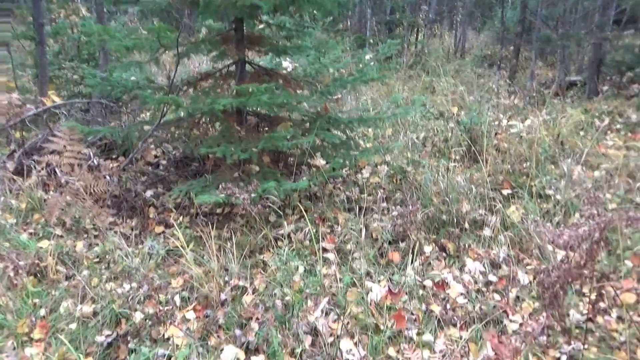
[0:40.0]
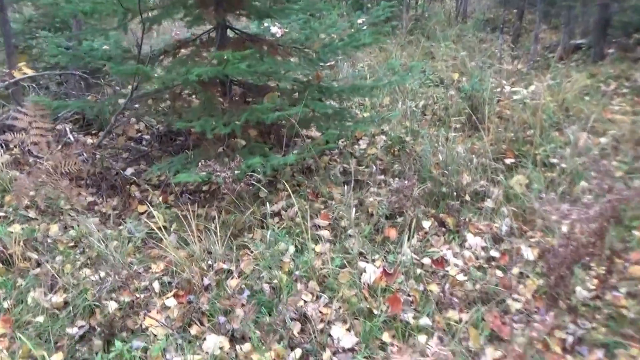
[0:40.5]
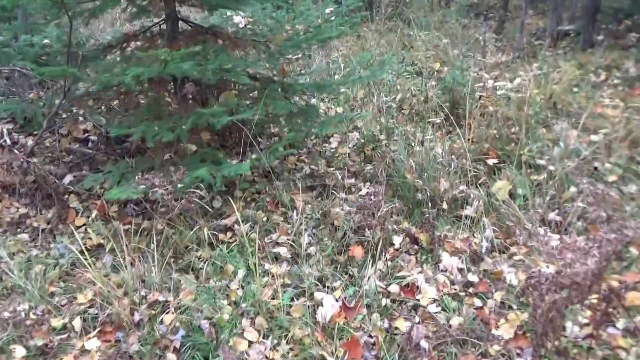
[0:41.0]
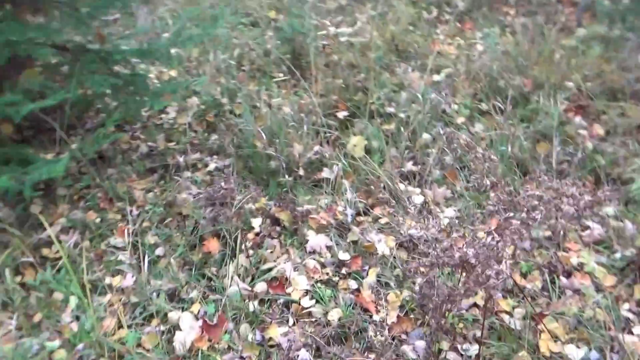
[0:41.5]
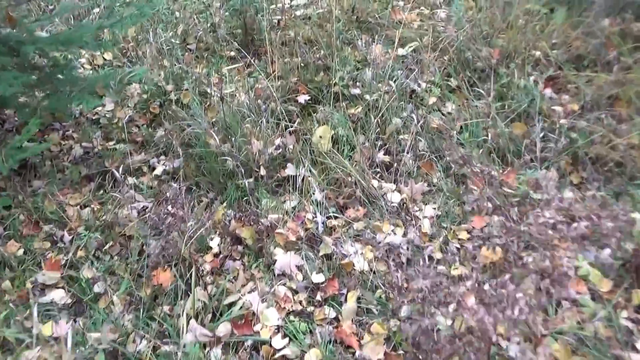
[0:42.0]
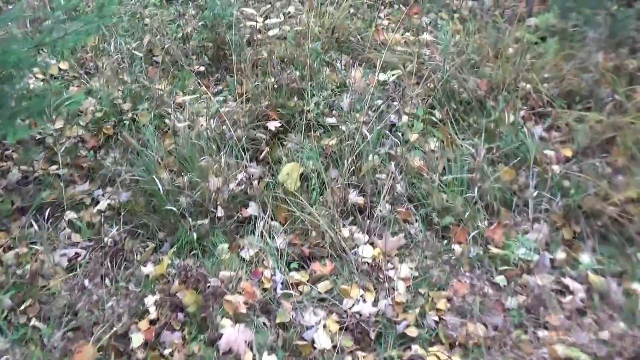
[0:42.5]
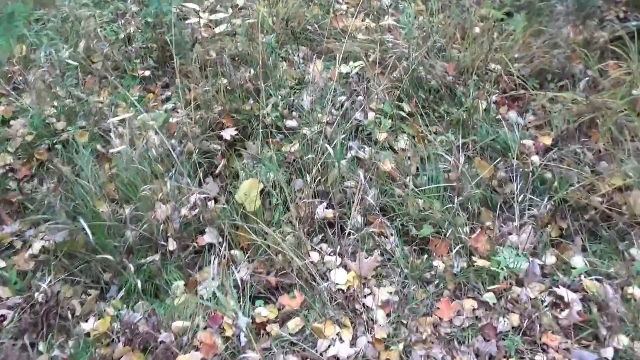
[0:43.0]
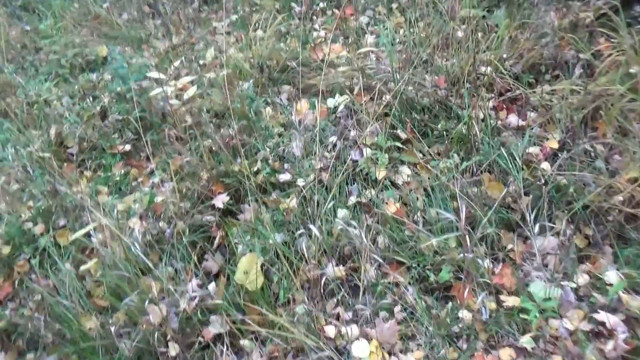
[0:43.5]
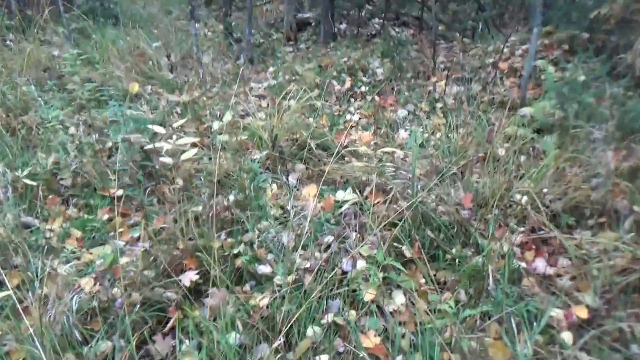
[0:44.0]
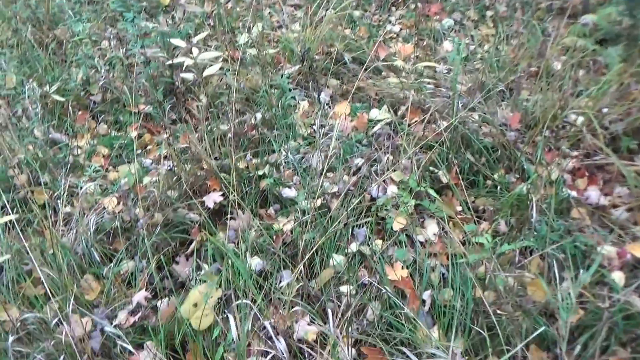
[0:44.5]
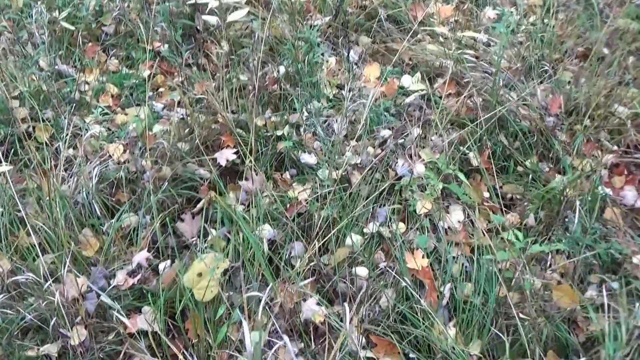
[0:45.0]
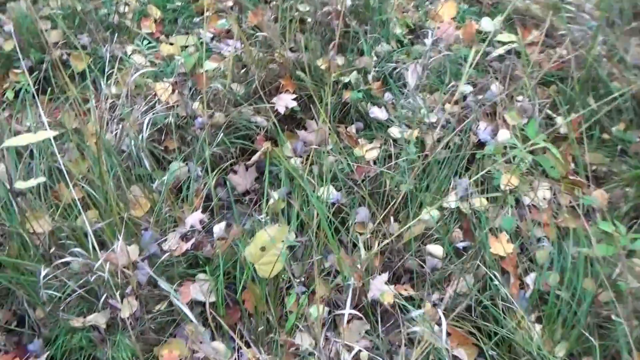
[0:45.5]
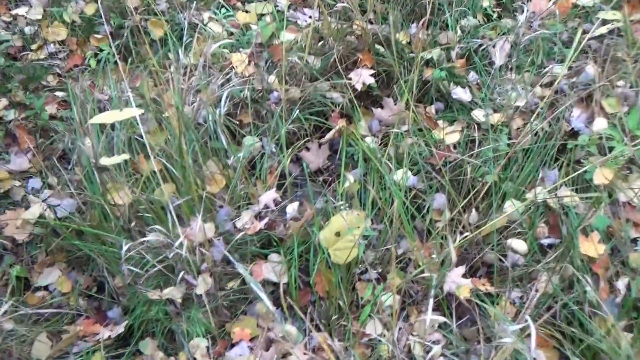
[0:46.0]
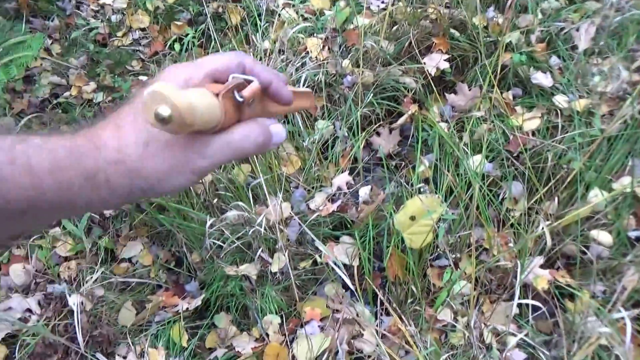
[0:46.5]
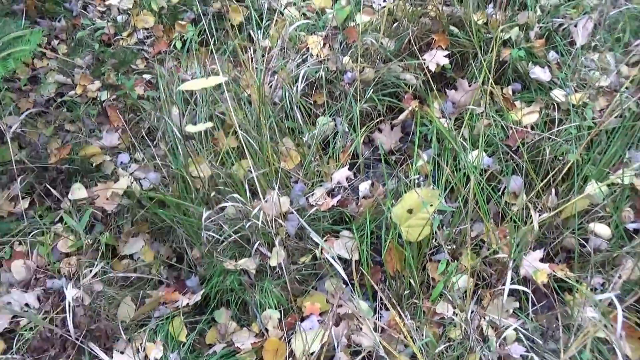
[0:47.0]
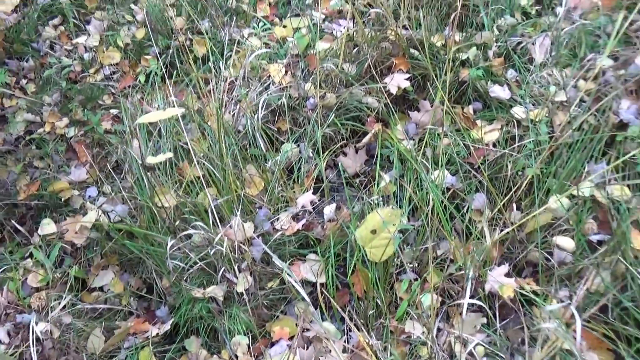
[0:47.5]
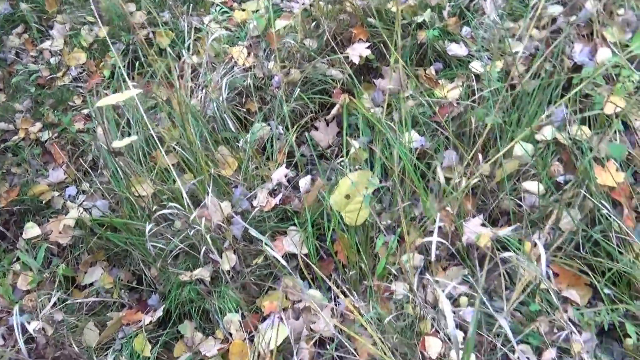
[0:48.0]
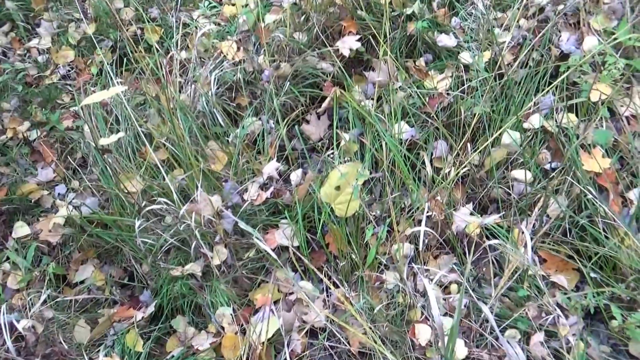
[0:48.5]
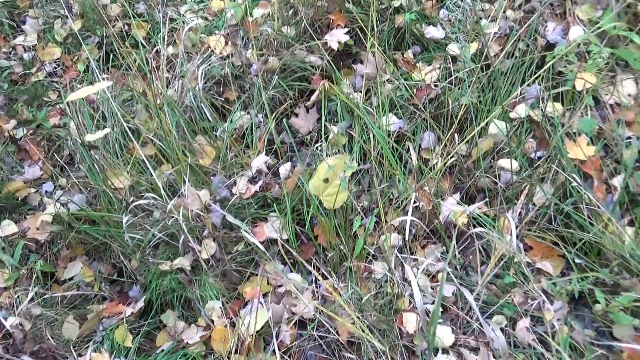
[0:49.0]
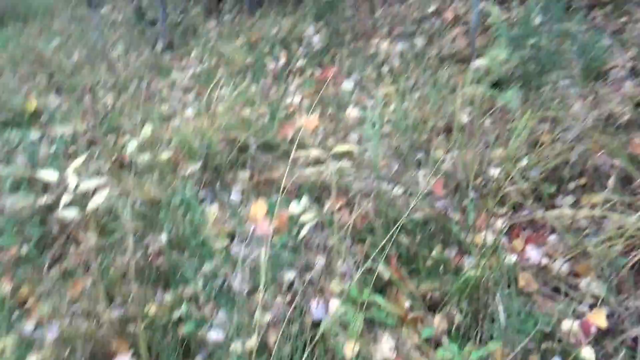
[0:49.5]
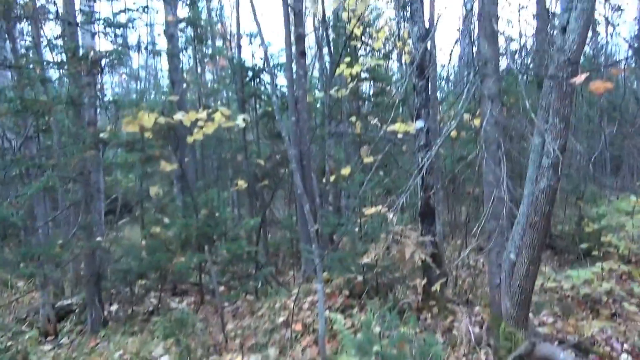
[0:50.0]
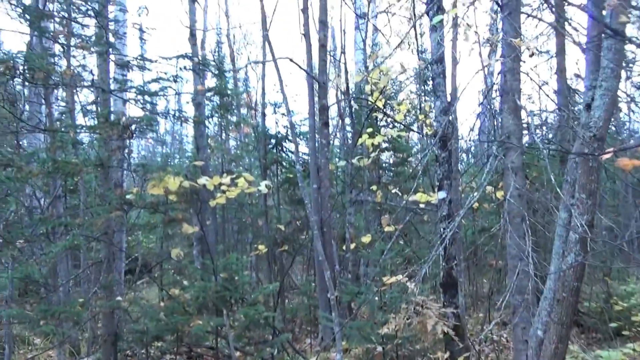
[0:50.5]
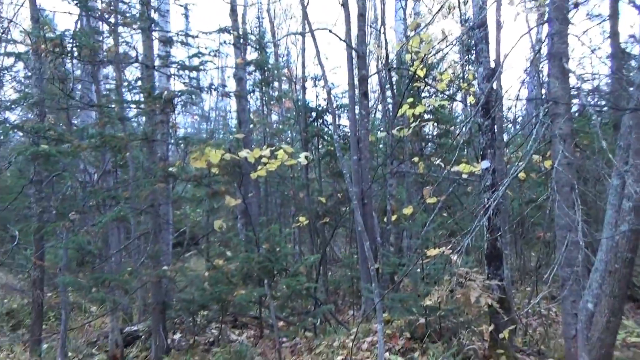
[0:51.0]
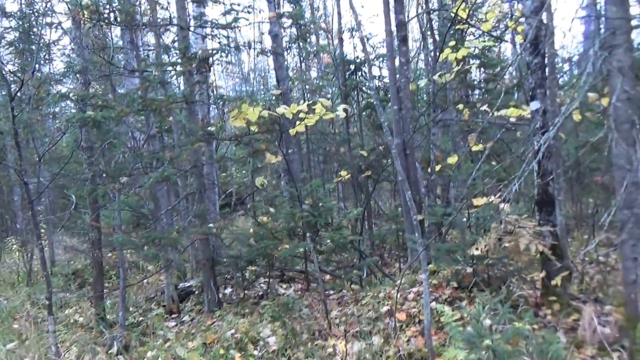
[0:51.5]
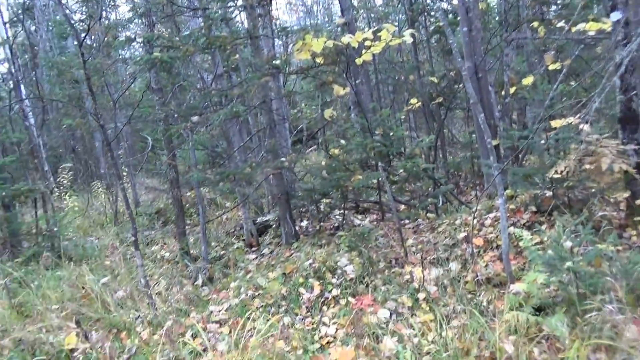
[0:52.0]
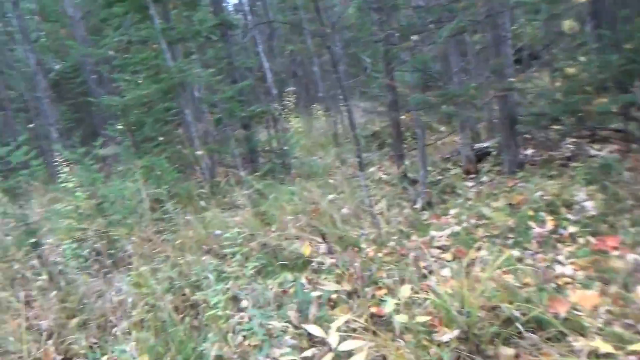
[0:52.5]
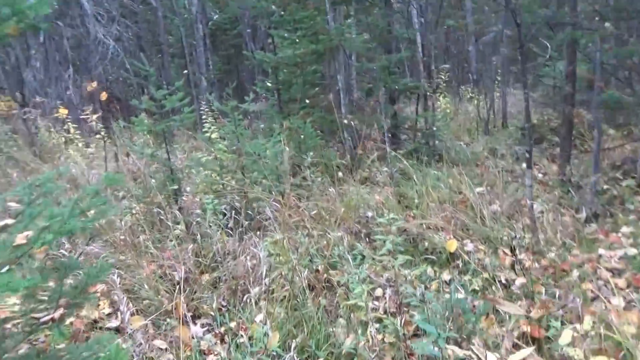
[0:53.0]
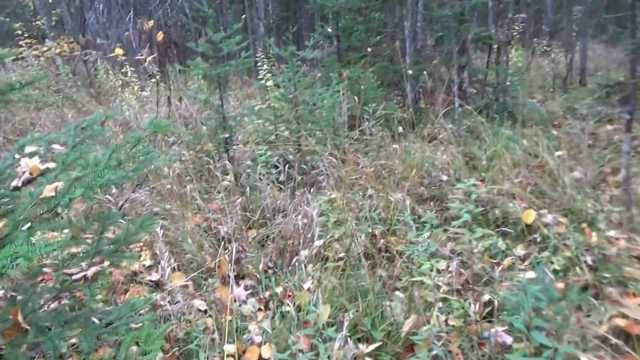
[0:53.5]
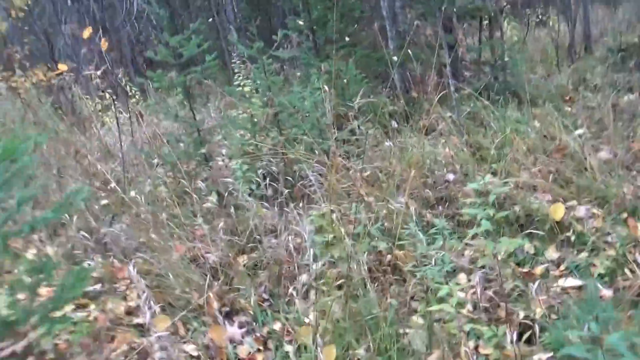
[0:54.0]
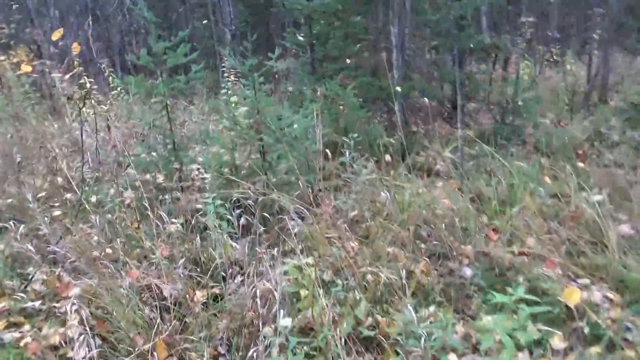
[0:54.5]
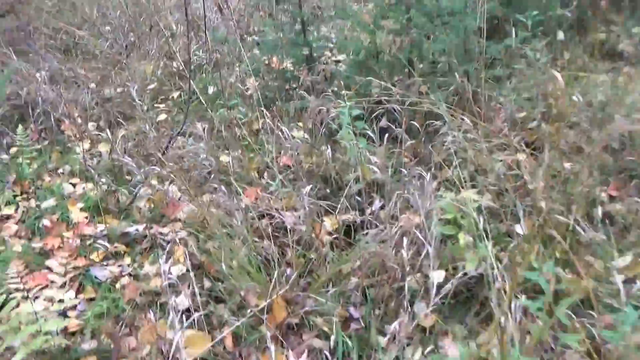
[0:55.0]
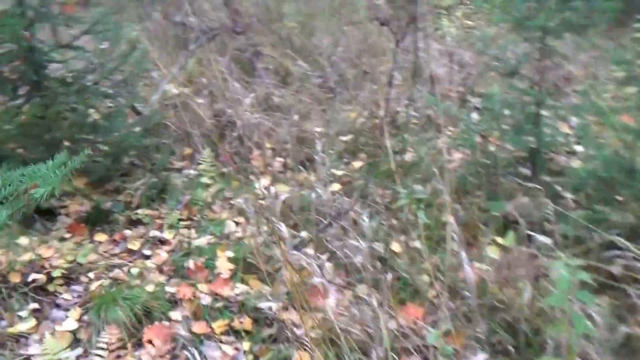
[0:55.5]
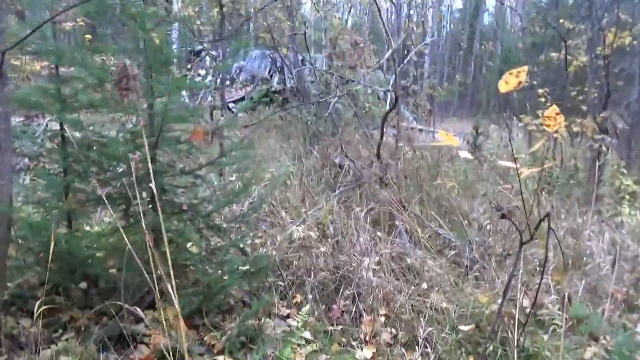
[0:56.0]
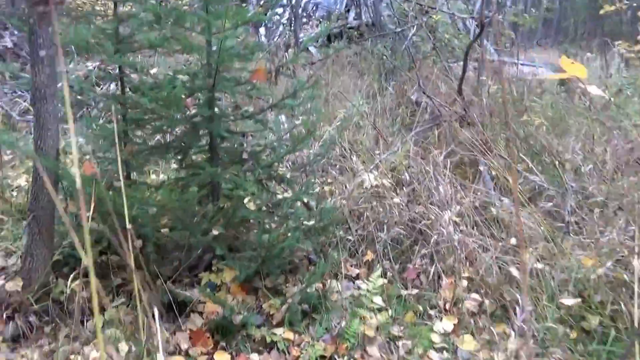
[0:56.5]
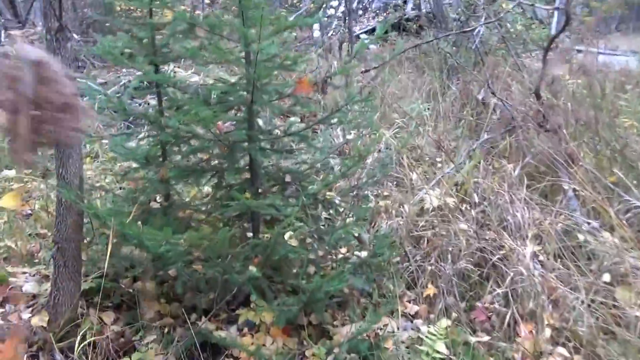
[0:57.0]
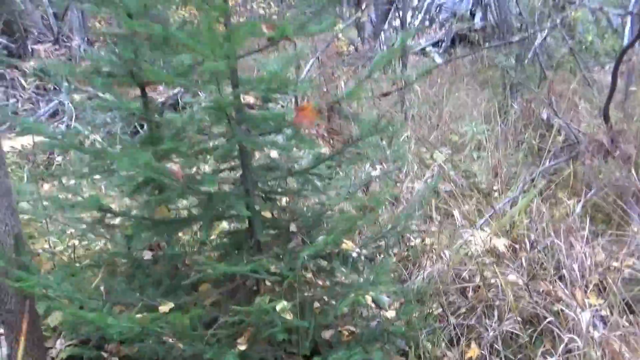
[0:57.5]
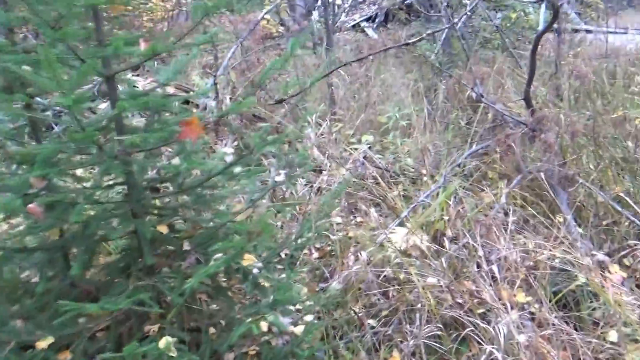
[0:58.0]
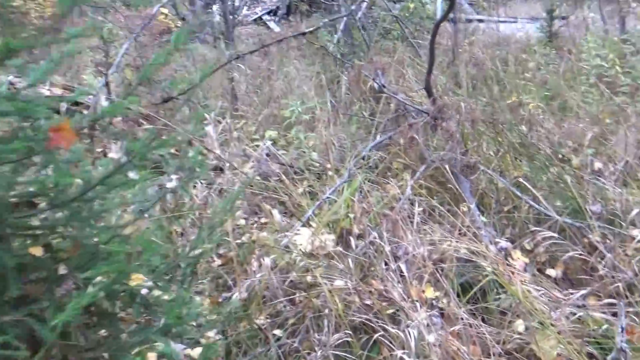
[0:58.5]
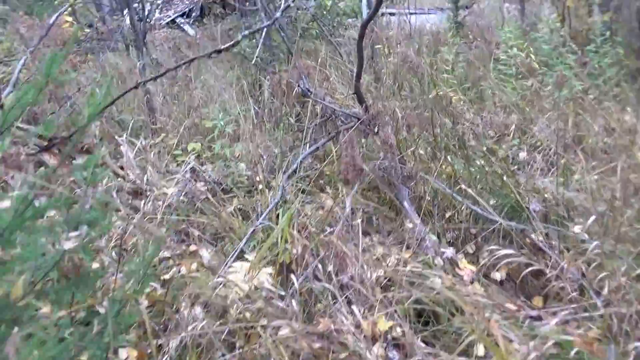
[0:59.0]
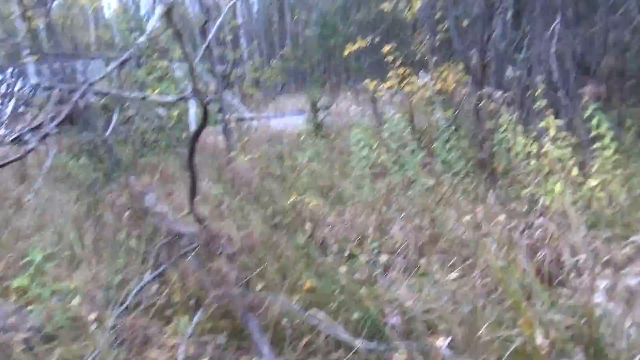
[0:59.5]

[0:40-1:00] The camera person walks while the camera pans down to the grass and leaves on the ground, which are evenly distributed. The person's left arm comes into view, holding the thin pen-like object and pointing it towards the ground. The camera pans upward into the branches and the sky, then left onto the grass and ground again, and rotates further left as the person keeps walking forward, showing a green tree with branches, similar to a Christmas tree, on the left-hand side. Lots of leaves of different colours, mostly yellowish, reddish and brown, are strewn between the grass. There are many branches, mostly bare and thin.